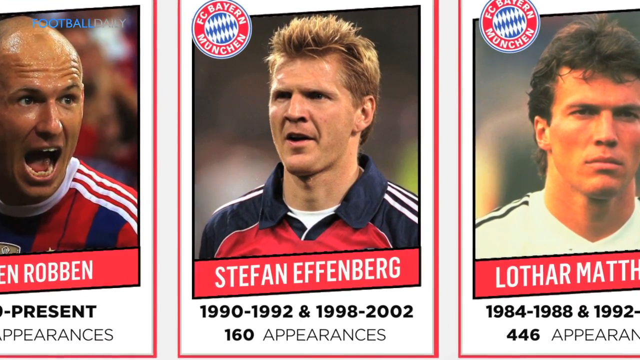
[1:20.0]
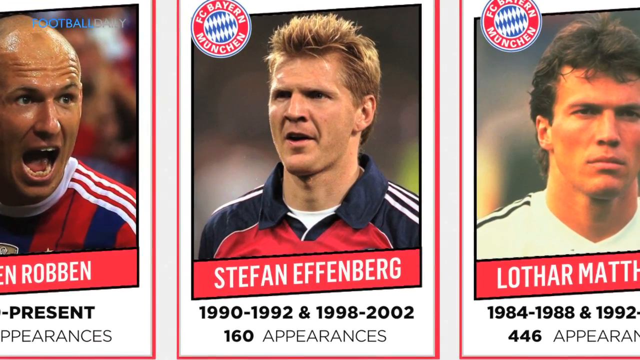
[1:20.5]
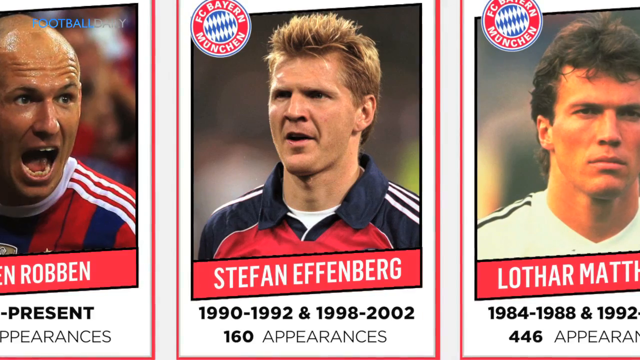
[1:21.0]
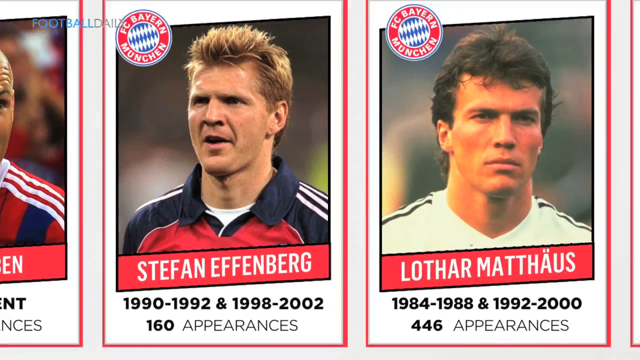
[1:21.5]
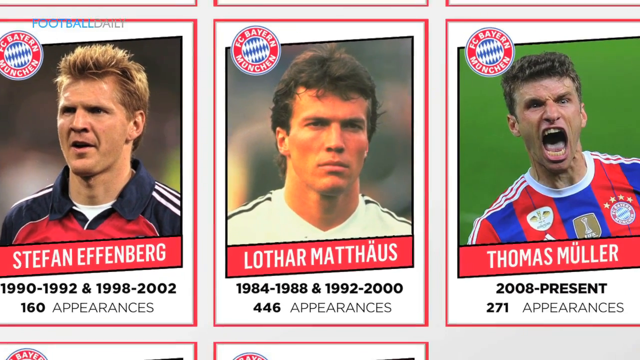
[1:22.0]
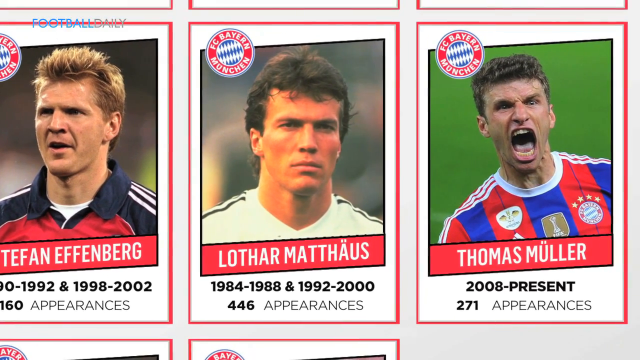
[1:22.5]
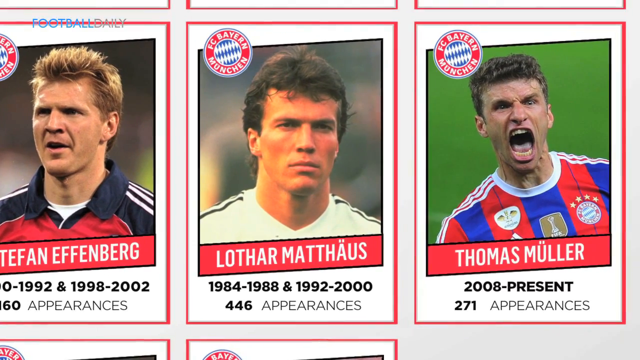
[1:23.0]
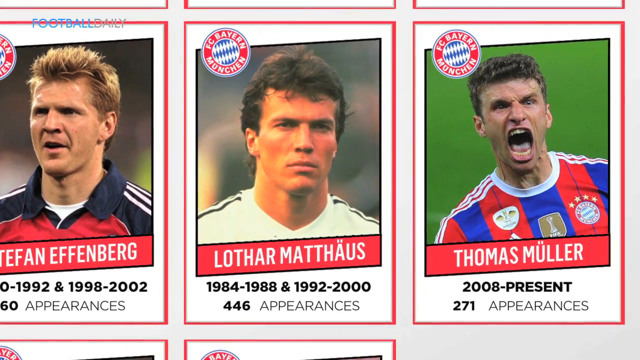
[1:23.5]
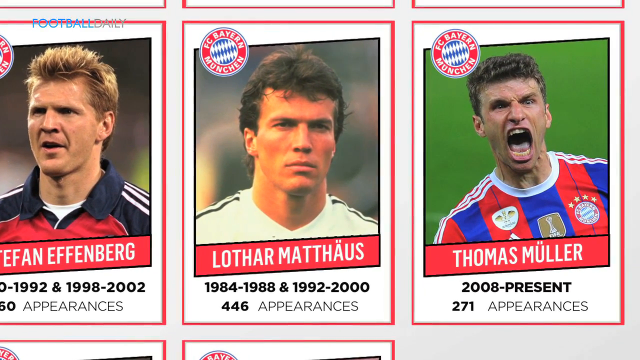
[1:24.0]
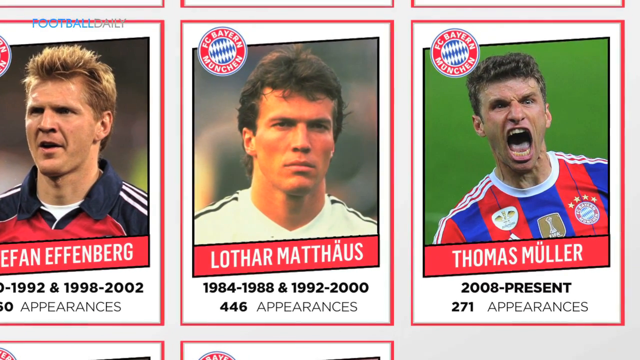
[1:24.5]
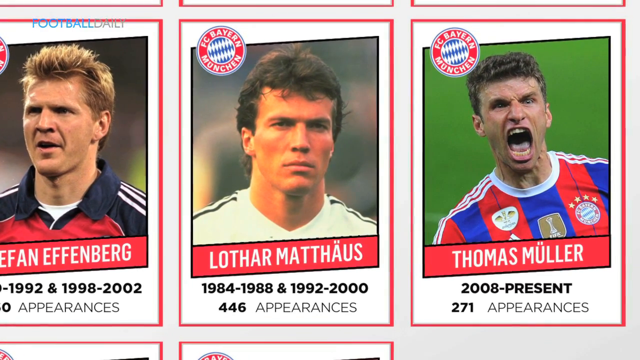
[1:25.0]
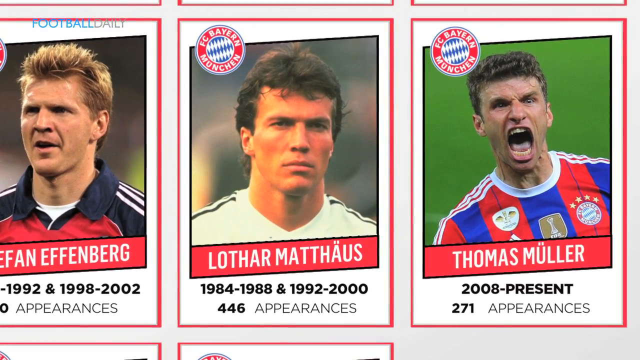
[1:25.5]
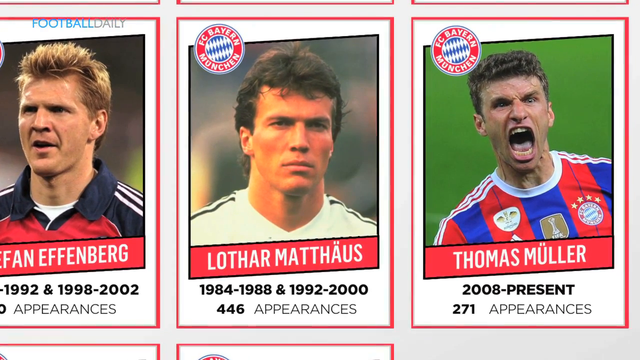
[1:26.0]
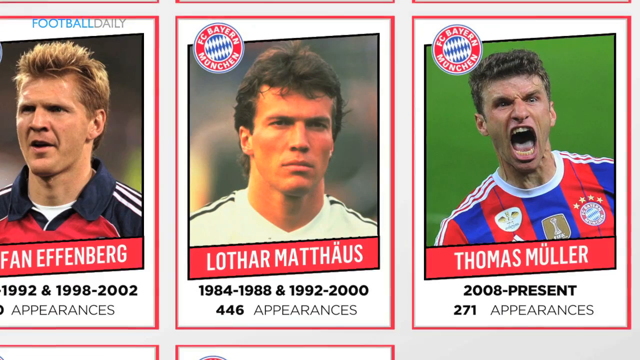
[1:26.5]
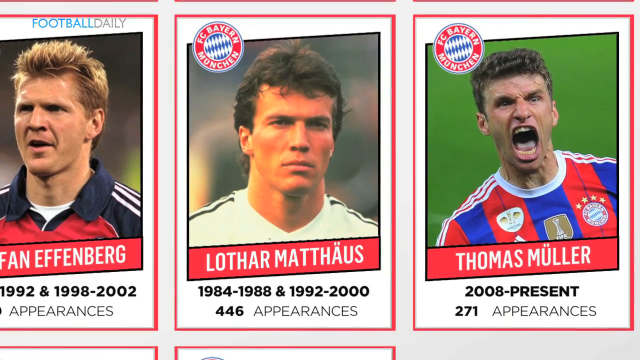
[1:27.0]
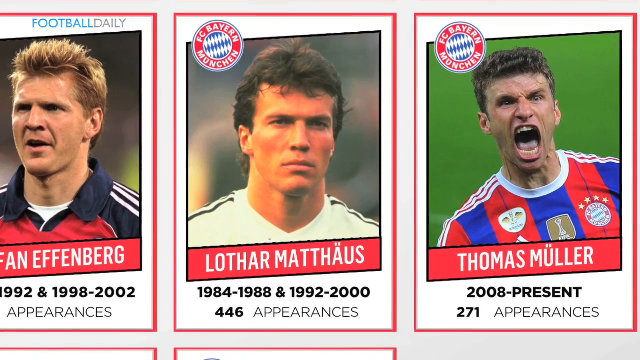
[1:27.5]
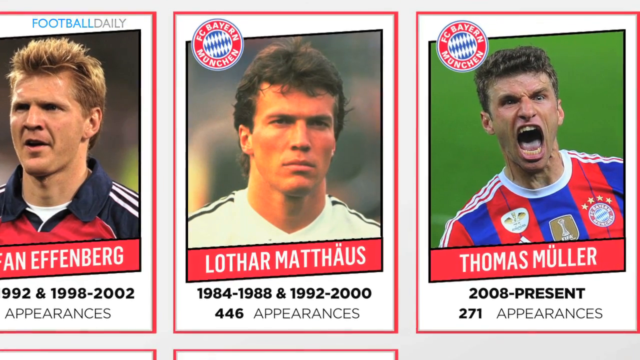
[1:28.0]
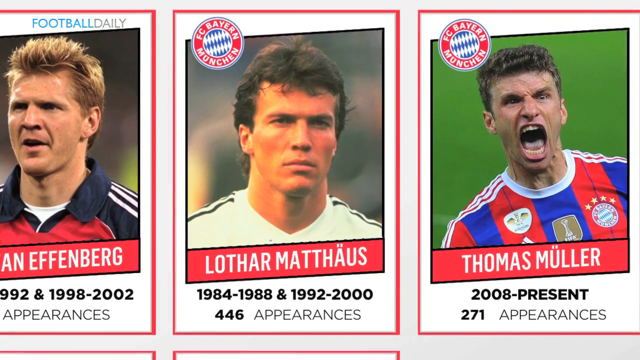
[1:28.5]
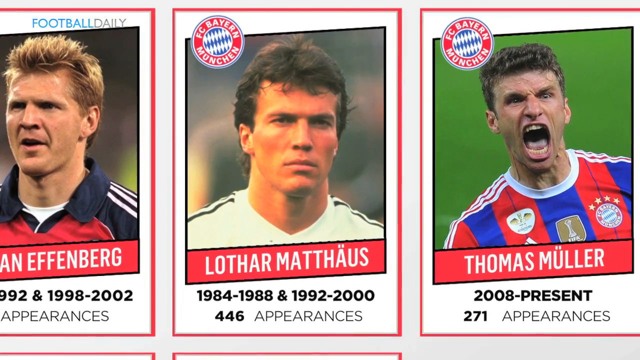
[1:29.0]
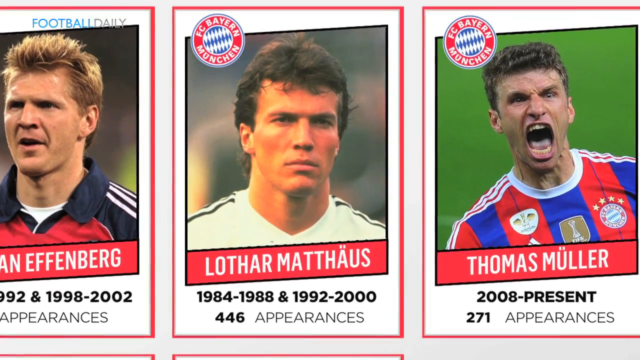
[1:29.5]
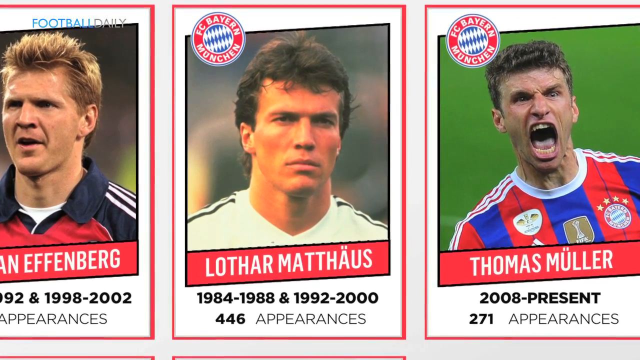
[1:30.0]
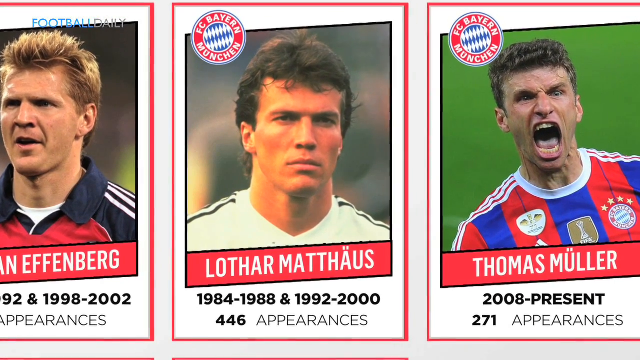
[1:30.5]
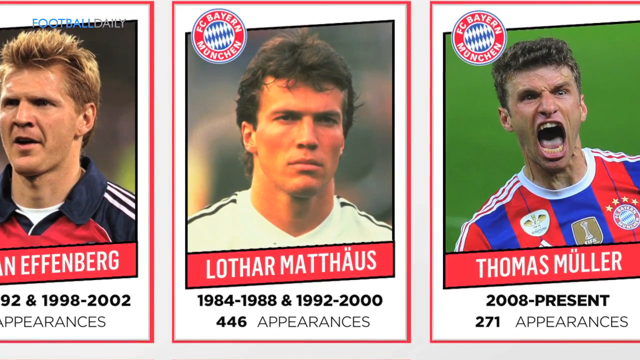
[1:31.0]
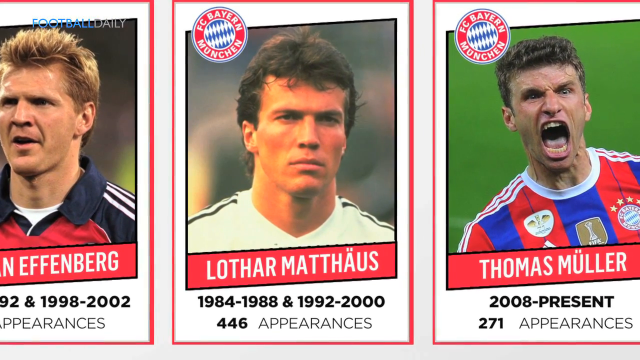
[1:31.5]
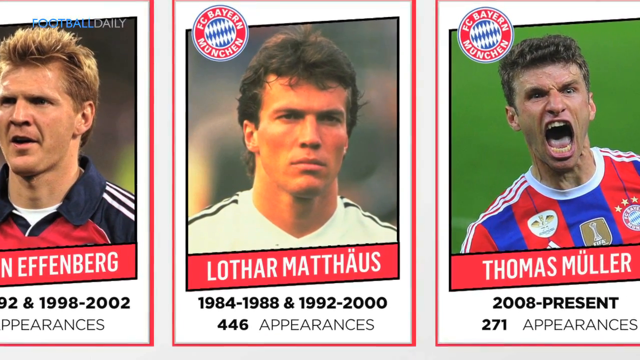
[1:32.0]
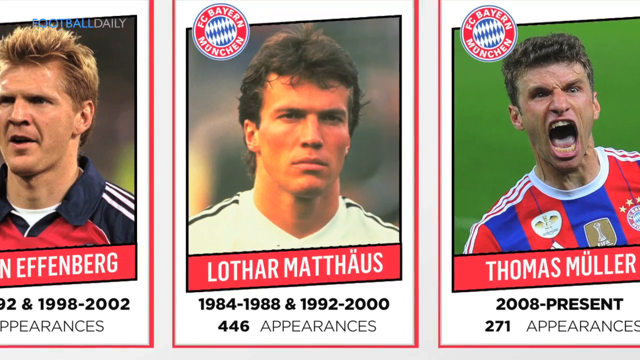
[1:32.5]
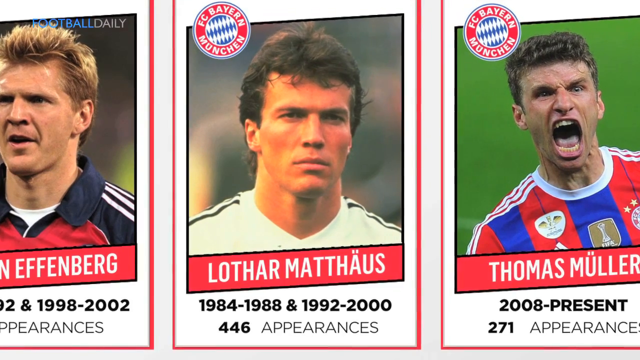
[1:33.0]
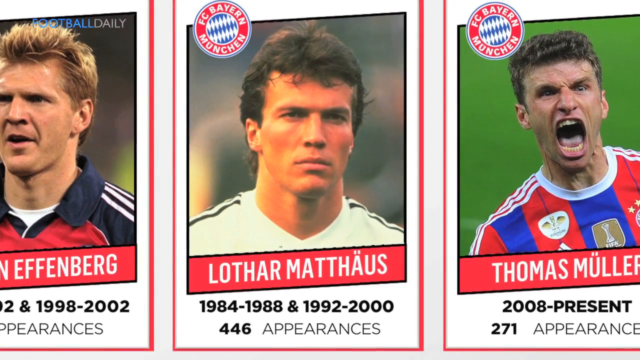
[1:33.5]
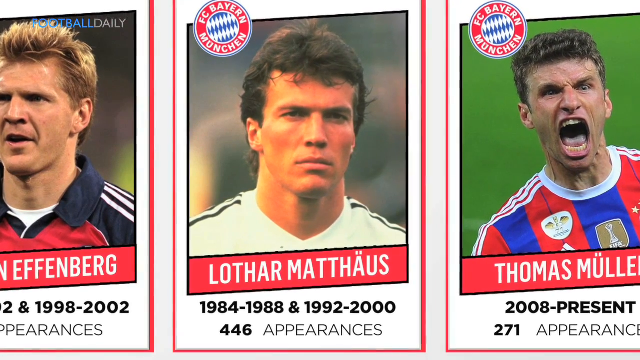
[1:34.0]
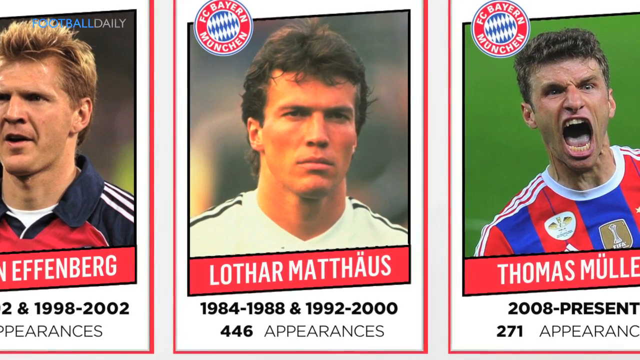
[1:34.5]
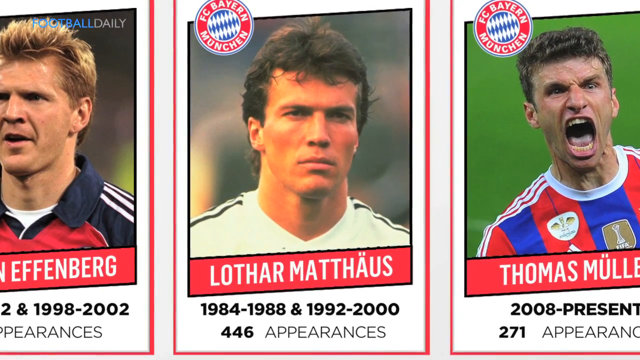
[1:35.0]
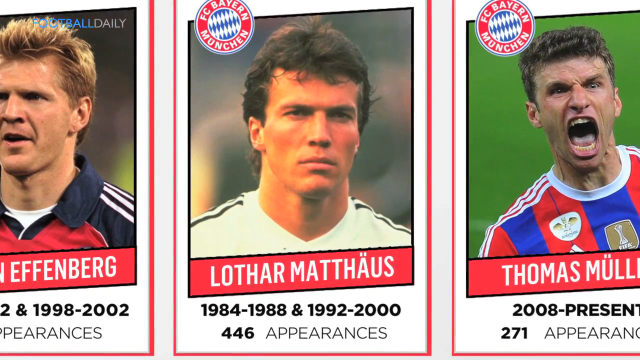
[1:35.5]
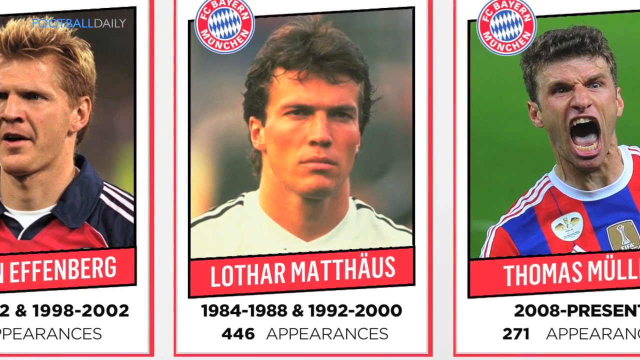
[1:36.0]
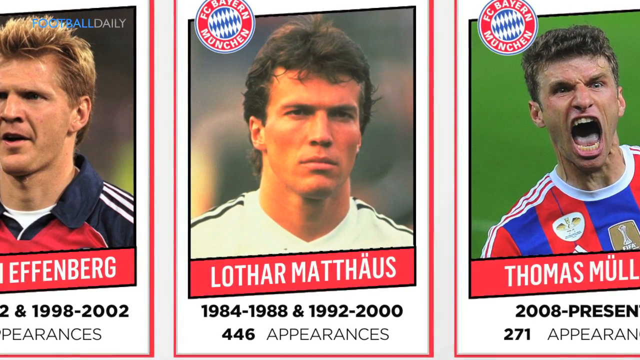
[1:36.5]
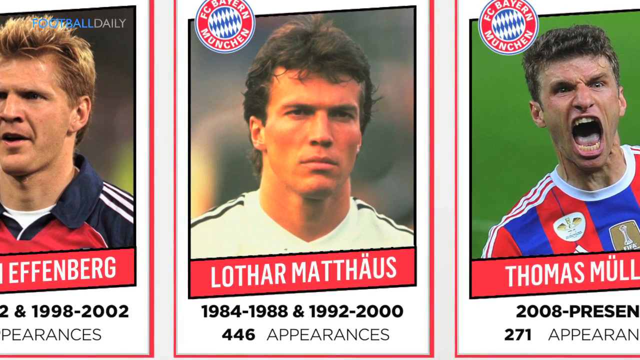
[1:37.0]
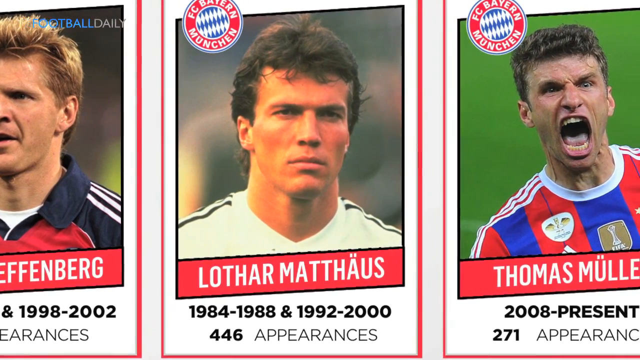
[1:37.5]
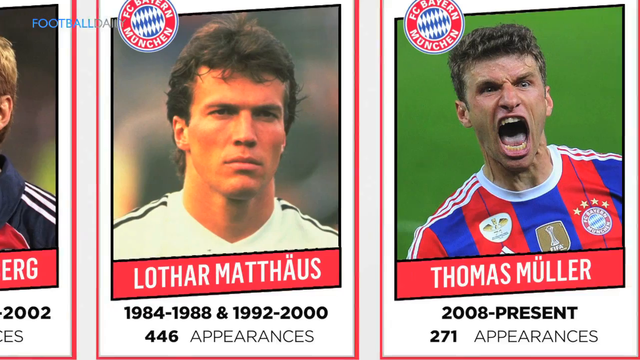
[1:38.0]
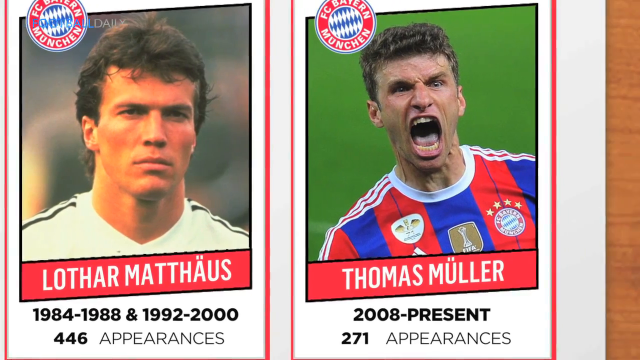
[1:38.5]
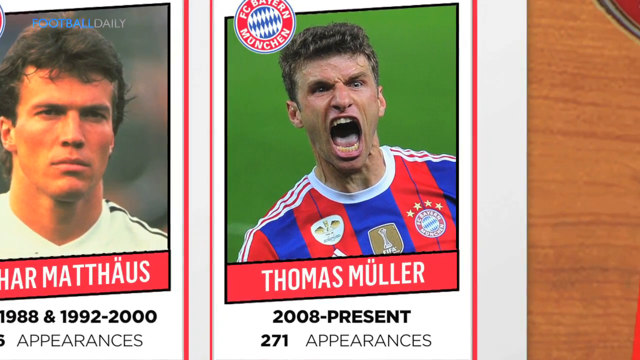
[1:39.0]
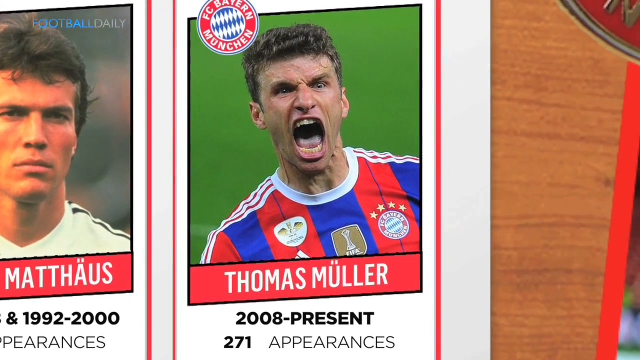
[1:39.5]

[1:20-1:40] The view is on Stefan Effenberg, "1990-1992 & 1998-2002". Next to him is "LOTHAR MATTHÄUS", "1984-1988 & 1992-2000", with "446 appearances" underneath. The next player is "THOMAS MÜLLER", "2008-present", with "271 appearances" underneath. For each person, the view zooms in on the face, name, years and stats, then zooms out and moves down to the next one, the same way as in the first row.